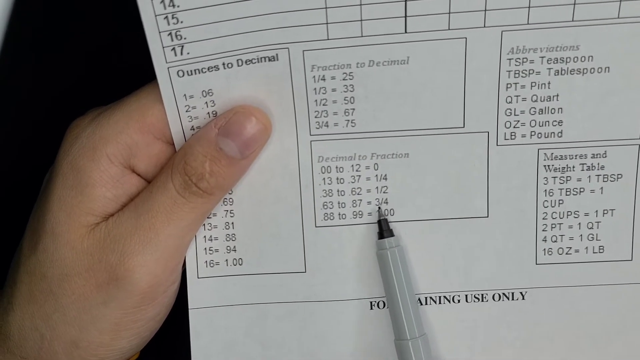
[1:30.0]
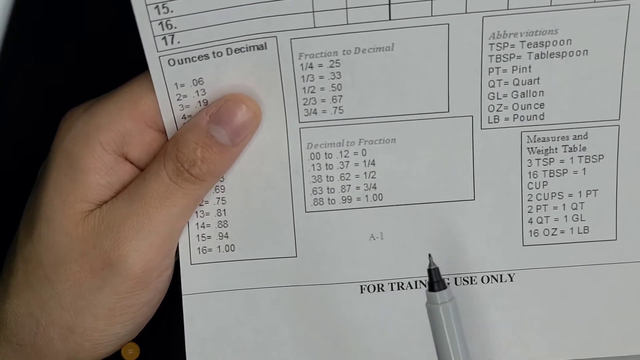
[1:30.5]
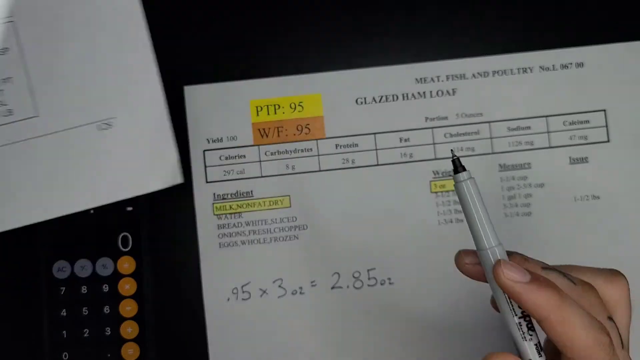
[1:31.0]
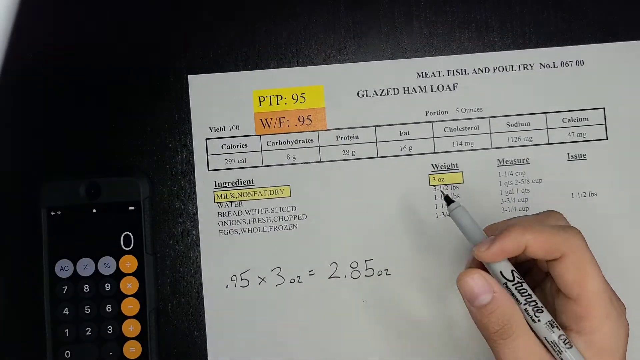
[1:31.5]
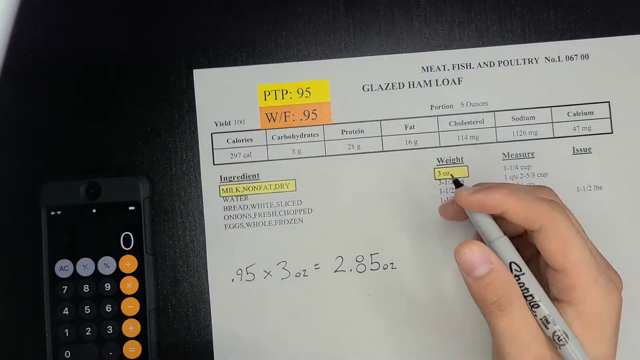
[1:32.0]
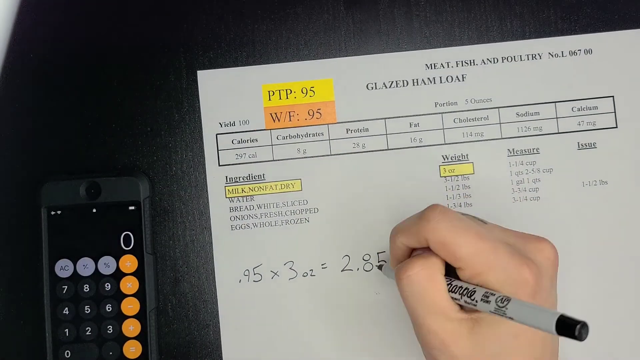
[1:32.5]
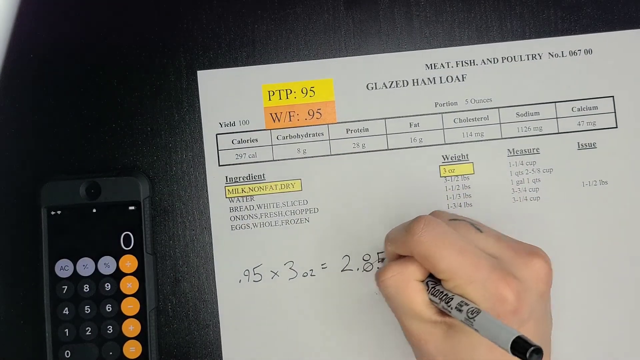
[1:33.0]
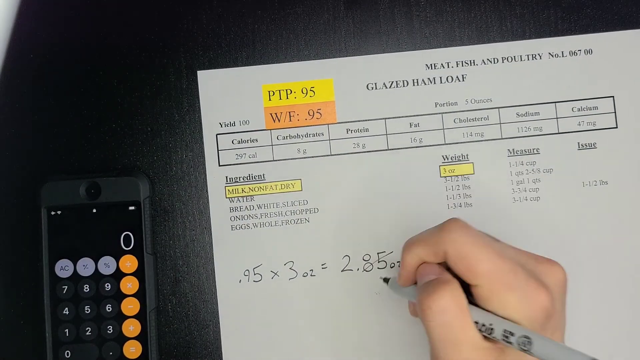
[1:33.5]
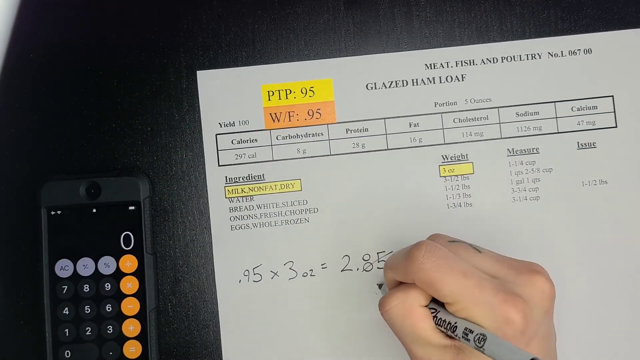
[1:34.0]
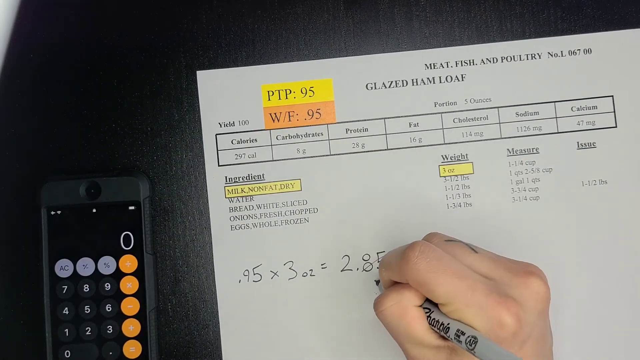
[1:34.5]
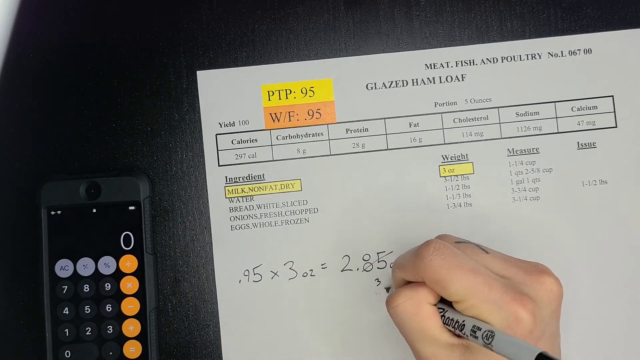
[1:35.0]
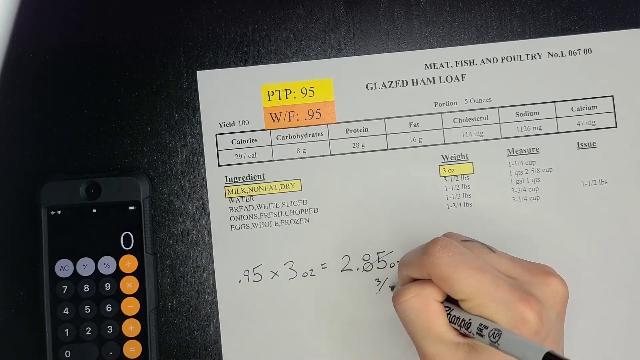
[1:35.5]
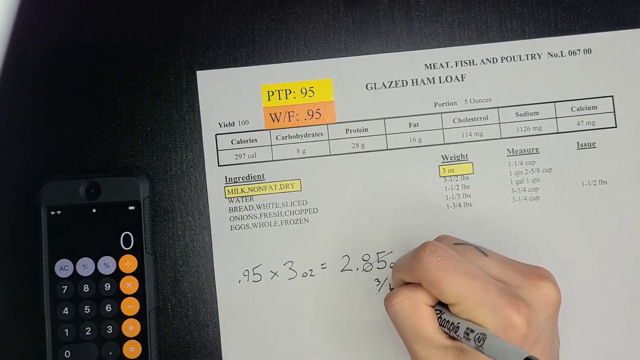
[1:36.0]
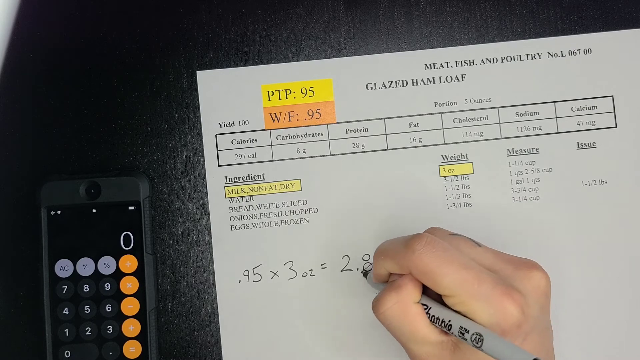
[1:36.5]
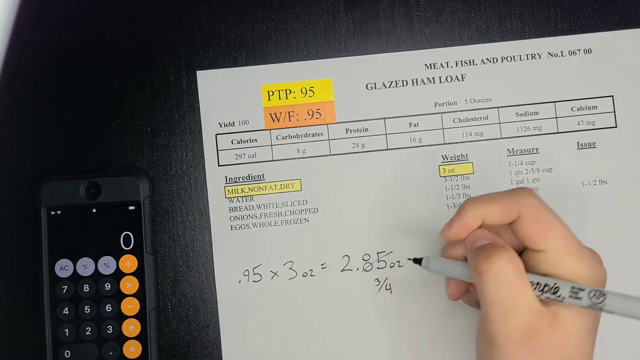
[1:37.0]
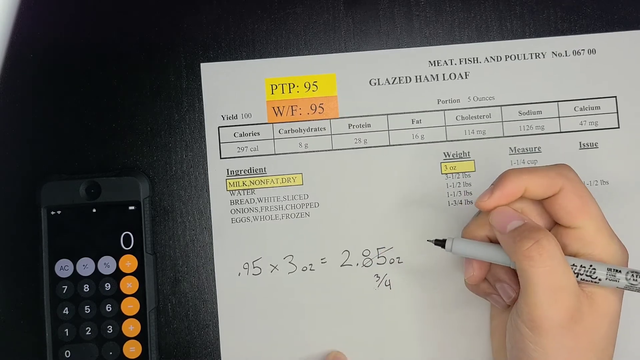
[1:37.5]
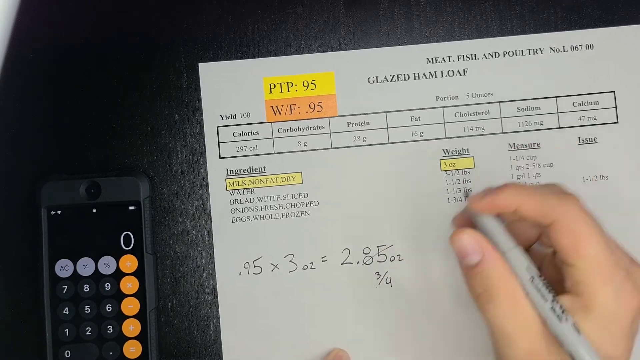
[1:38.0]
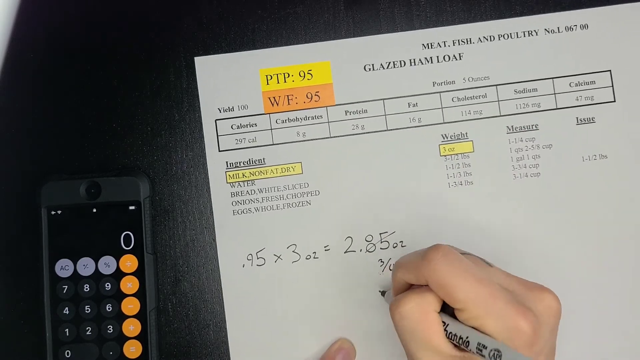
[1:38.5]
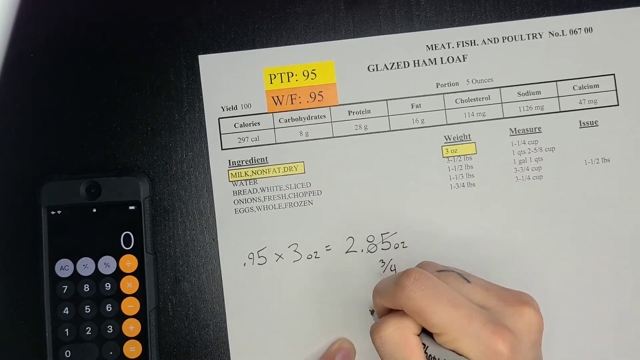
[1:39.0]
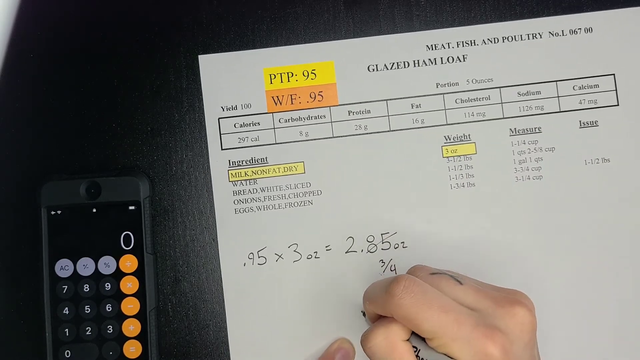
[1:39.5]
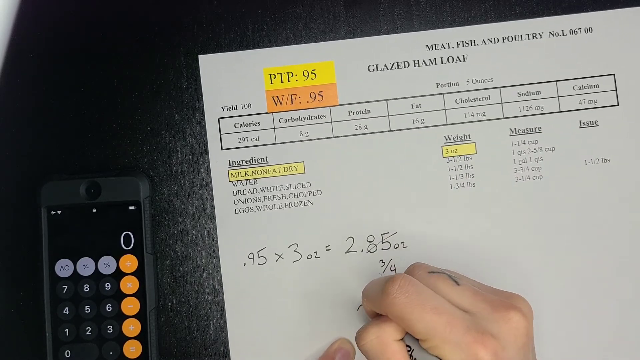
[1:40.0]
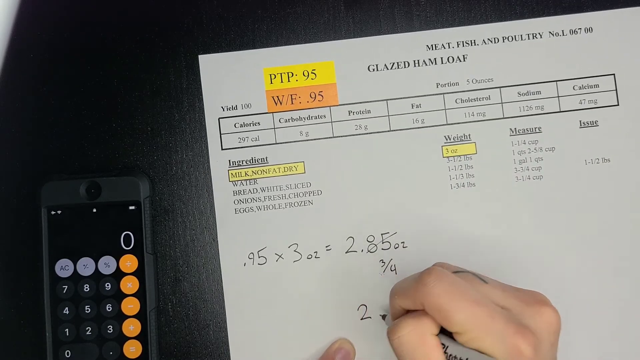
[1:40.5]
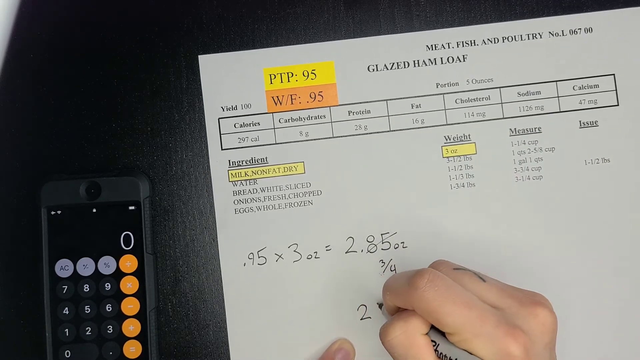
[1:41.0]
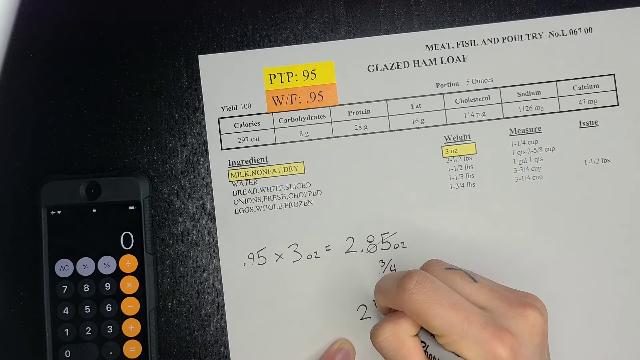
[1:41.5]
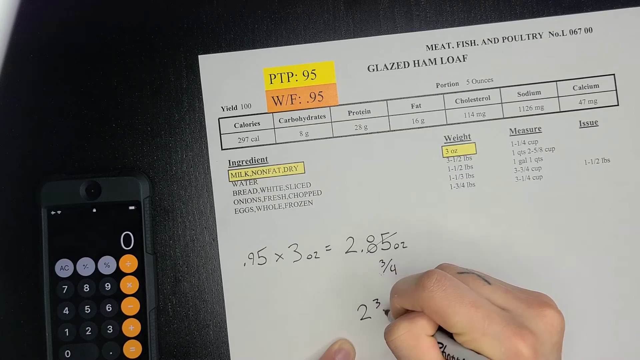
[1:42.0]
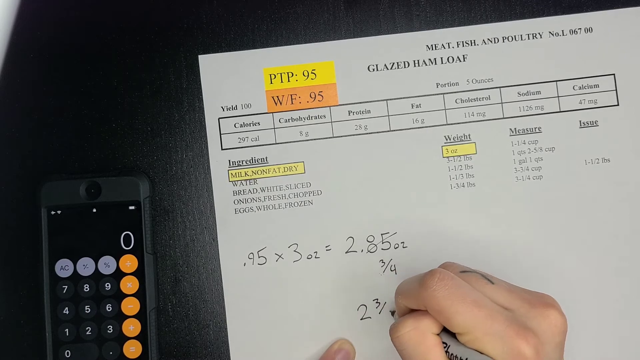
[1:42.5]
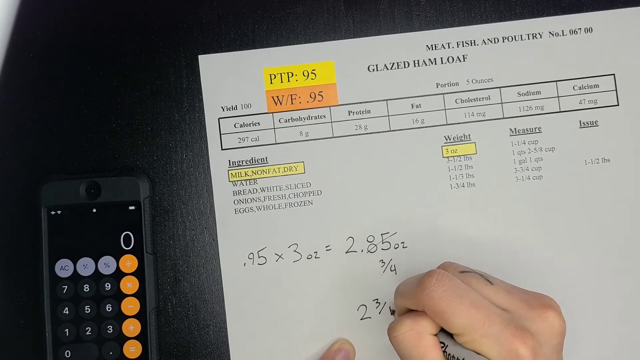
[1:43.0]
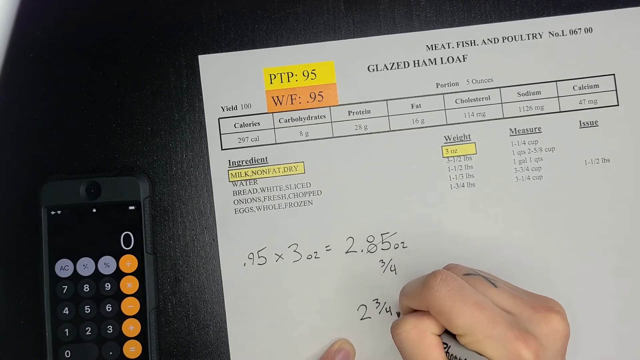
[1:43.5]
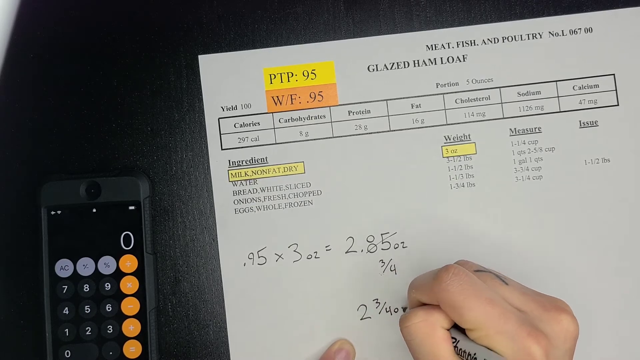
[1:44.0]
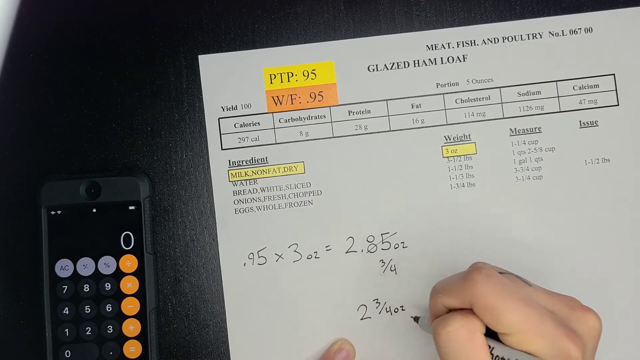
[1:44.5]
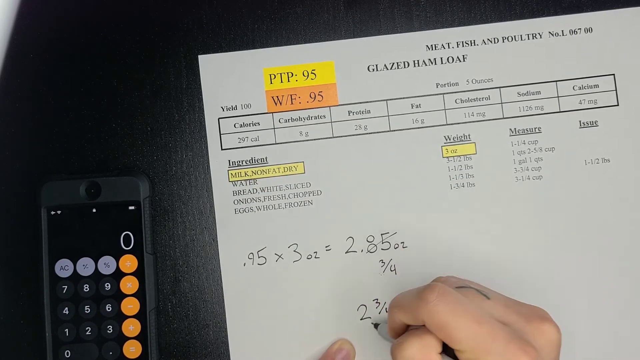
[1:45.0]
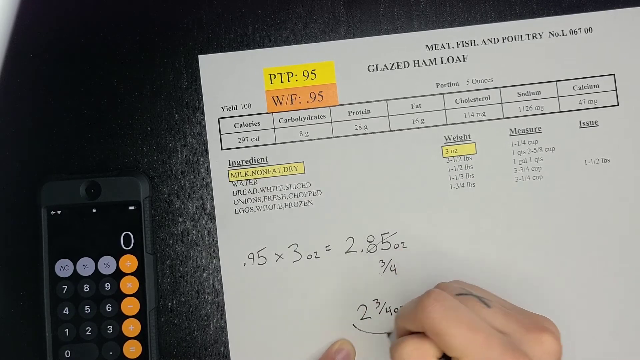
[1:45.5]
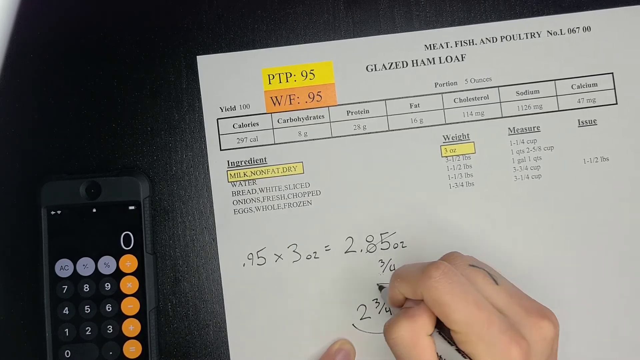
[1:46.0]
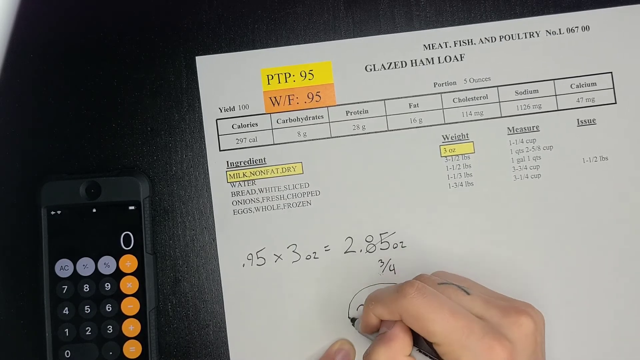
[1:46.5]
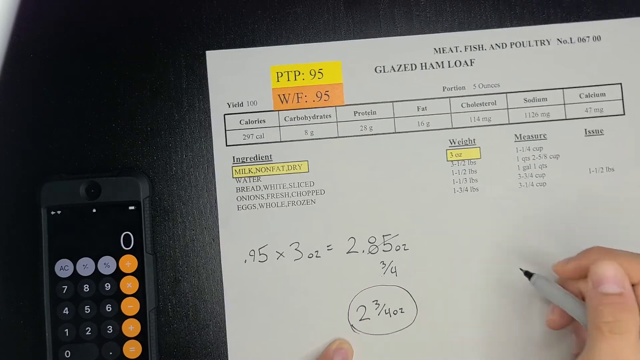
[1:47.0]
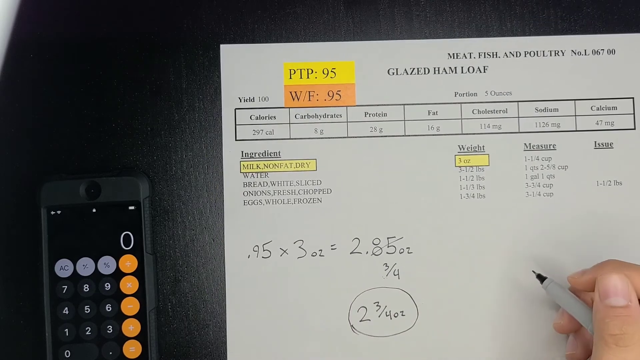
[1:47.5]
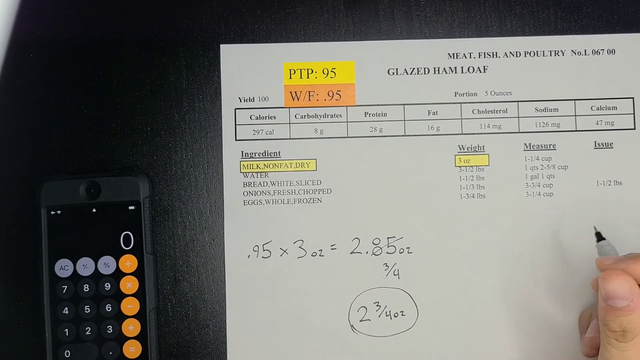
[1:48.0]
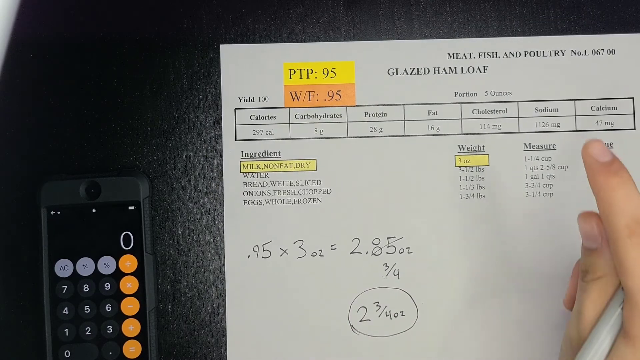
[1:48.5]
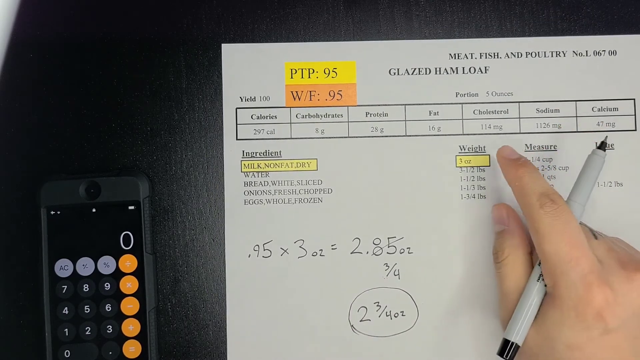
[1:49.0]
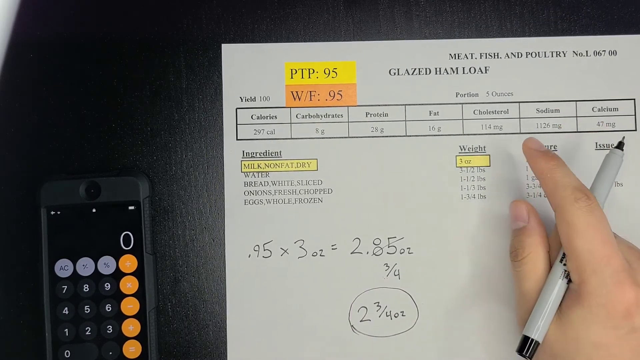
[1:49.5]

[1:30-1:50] The numbers are shown, and the 2.85 oz result for the milk falls into a section of the sheet for a quantity written as a fraction rather than a decimal. The material is for training use only. The PTP has to be completed for each ingredient shown, including the water and the bread.